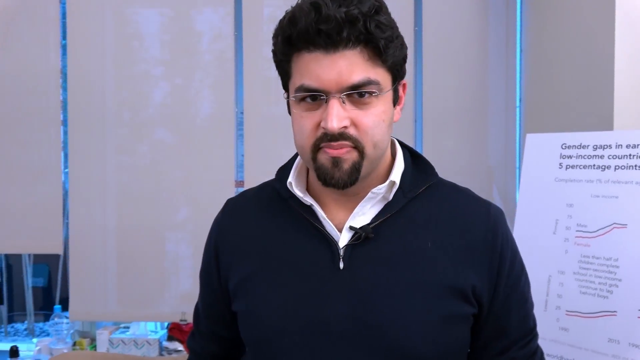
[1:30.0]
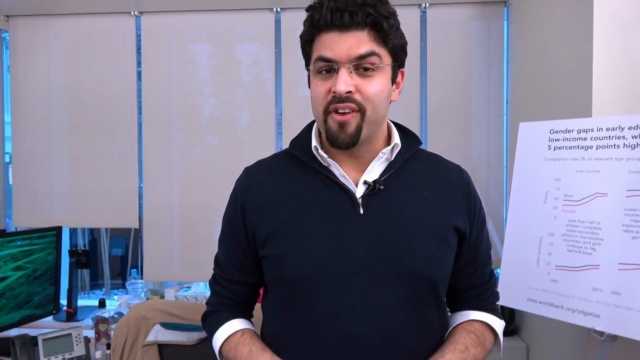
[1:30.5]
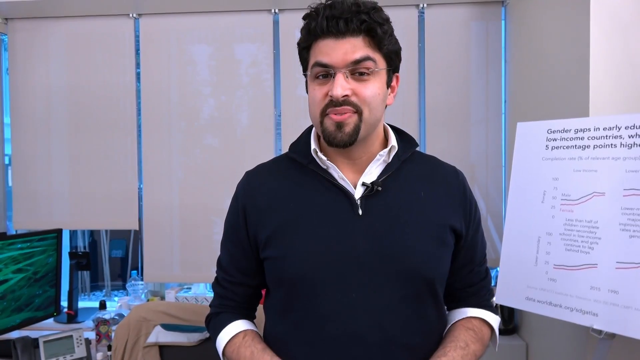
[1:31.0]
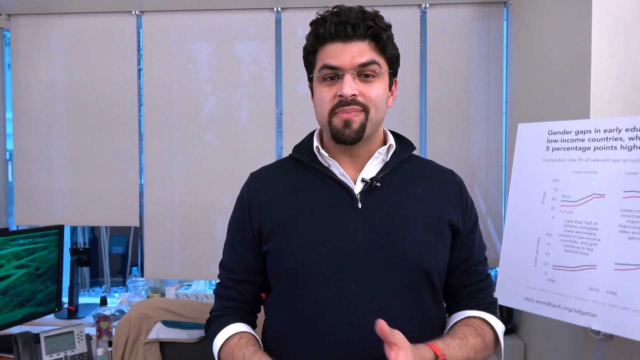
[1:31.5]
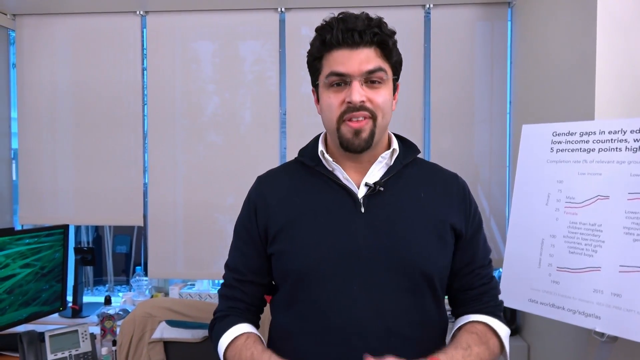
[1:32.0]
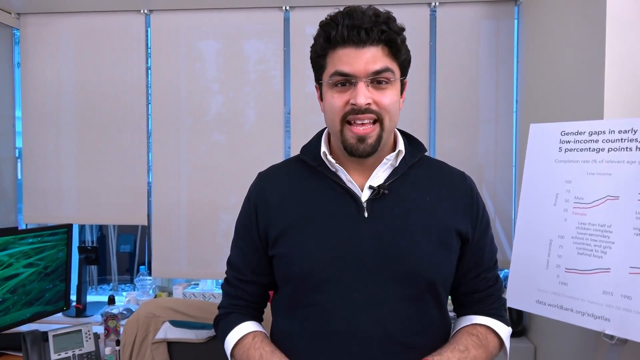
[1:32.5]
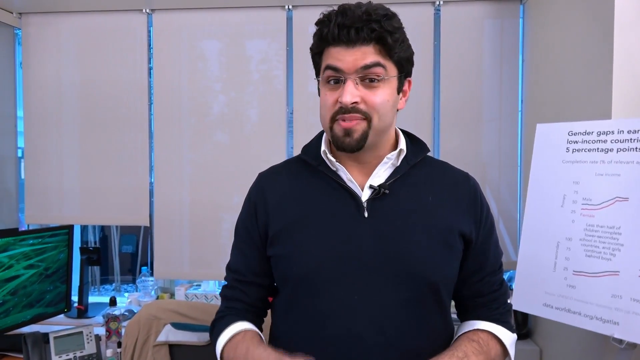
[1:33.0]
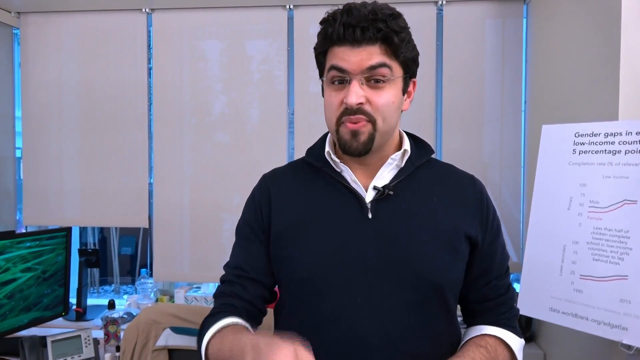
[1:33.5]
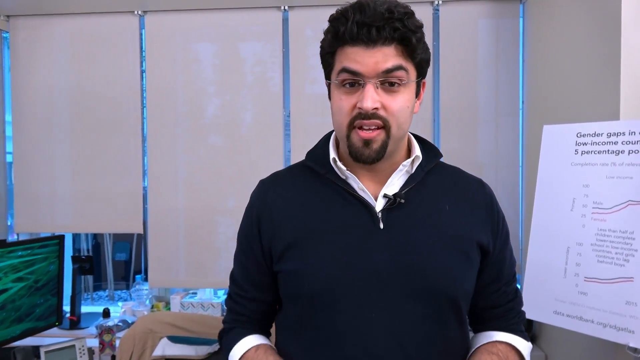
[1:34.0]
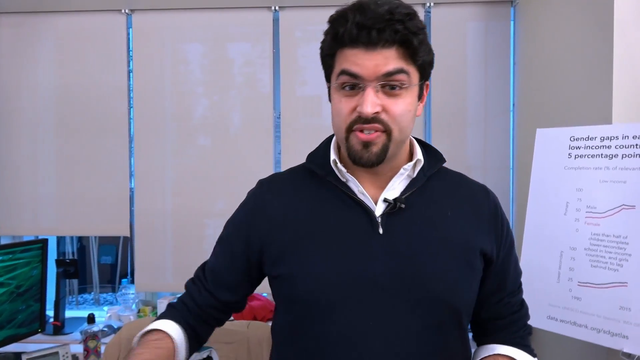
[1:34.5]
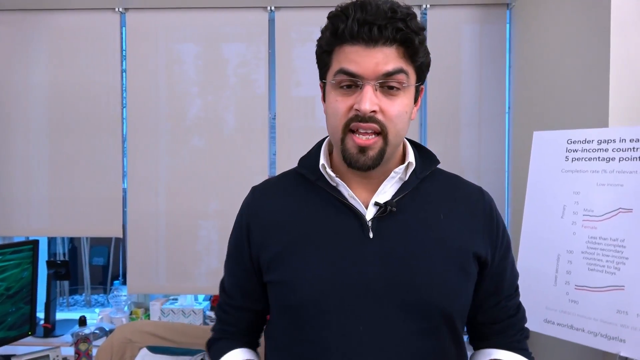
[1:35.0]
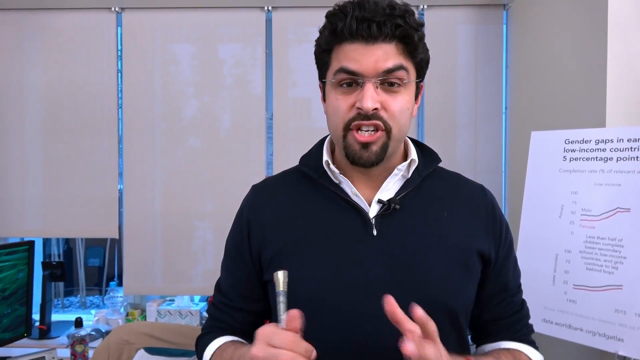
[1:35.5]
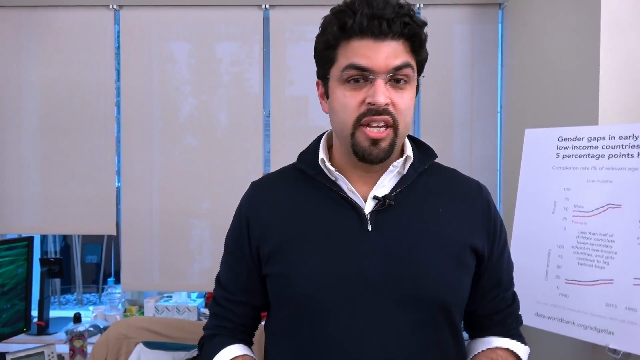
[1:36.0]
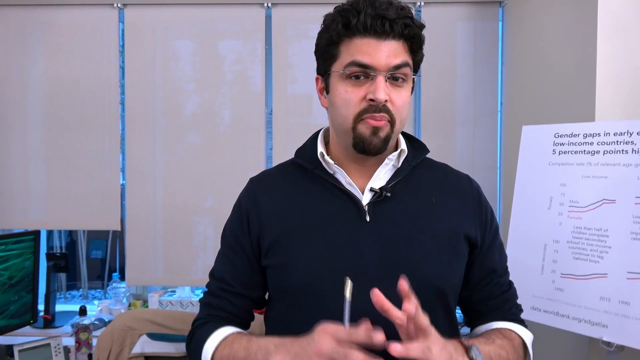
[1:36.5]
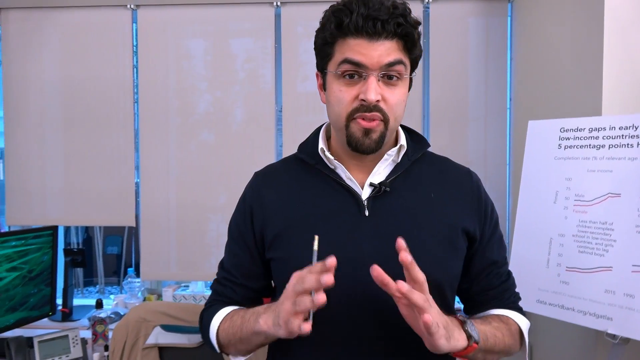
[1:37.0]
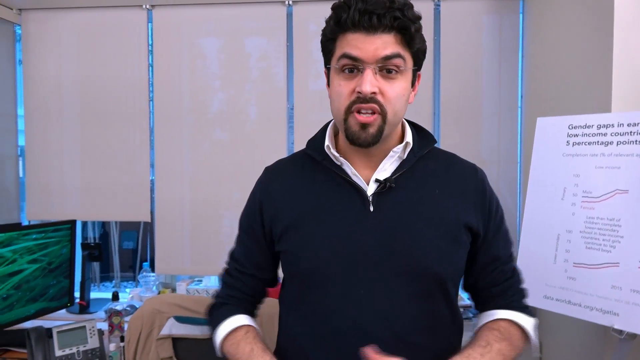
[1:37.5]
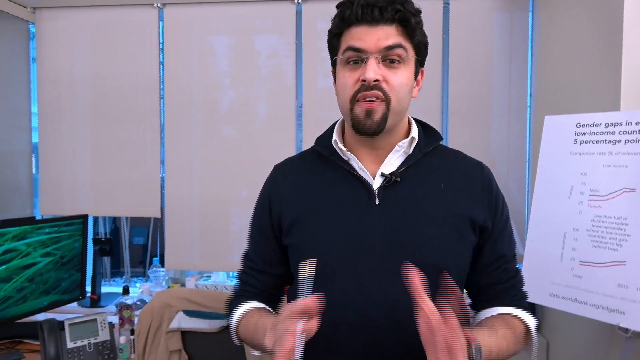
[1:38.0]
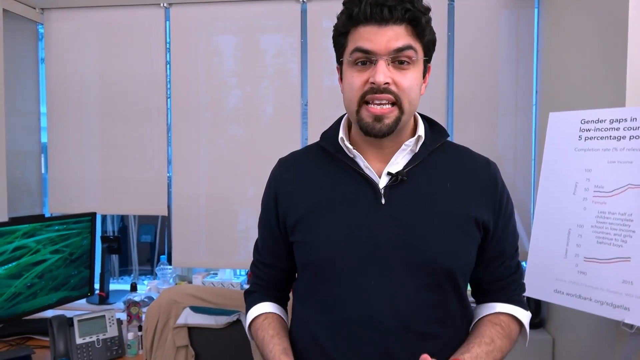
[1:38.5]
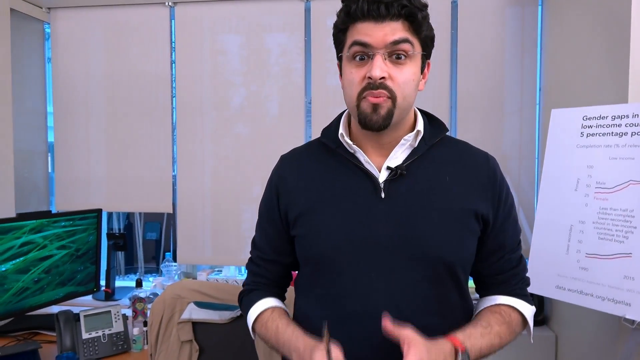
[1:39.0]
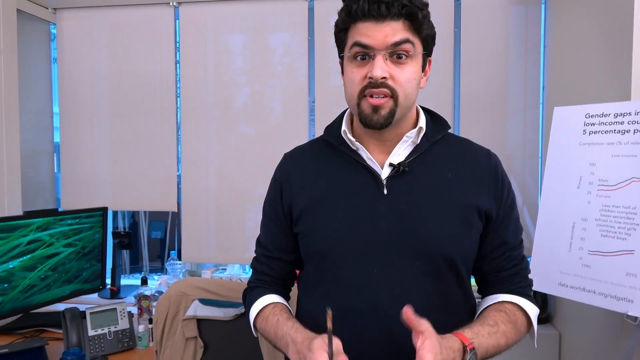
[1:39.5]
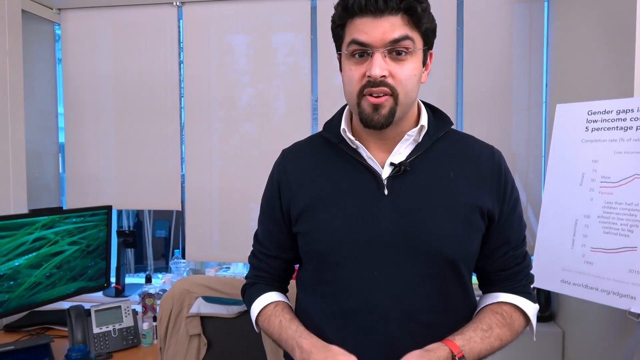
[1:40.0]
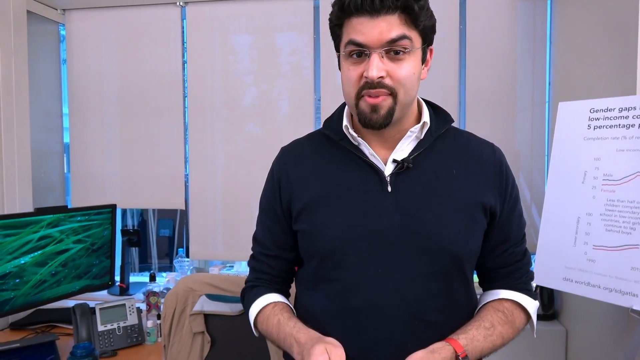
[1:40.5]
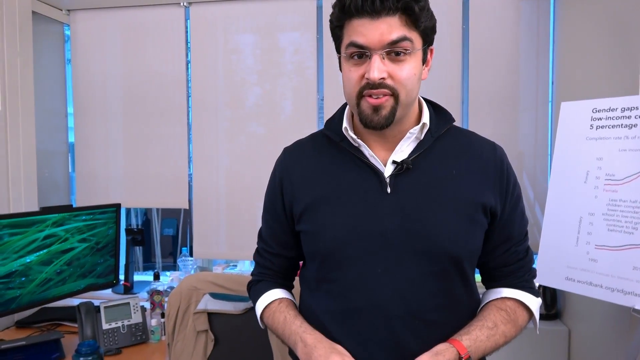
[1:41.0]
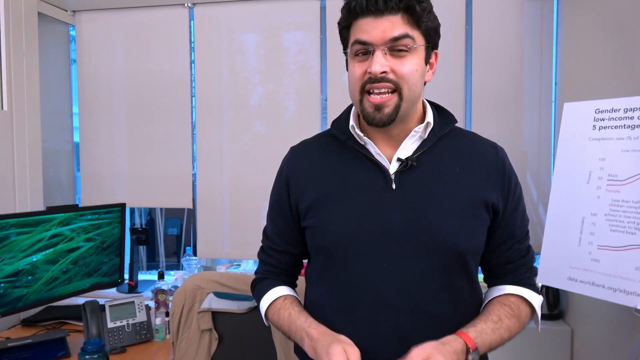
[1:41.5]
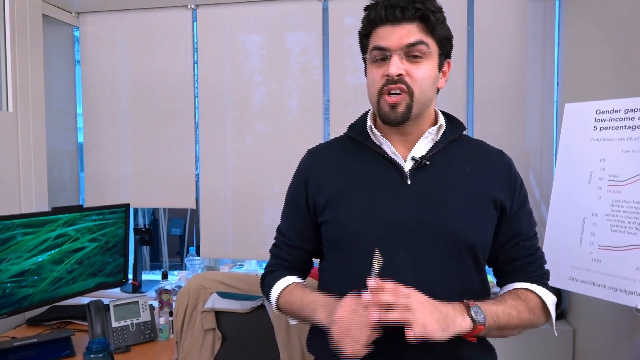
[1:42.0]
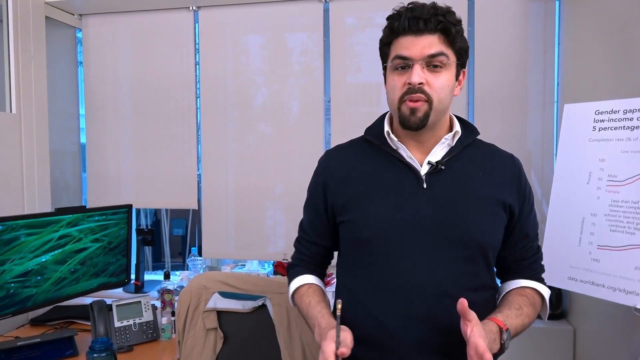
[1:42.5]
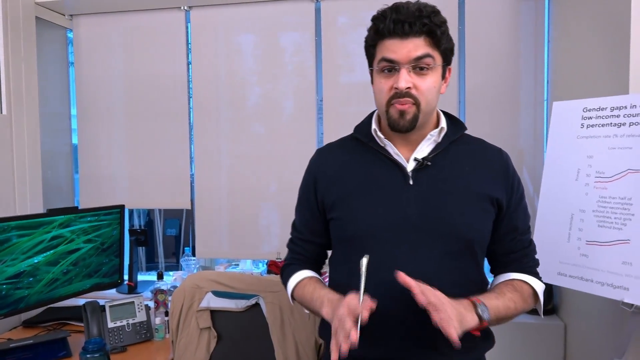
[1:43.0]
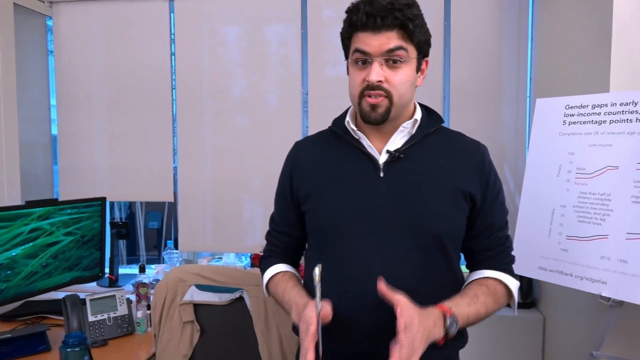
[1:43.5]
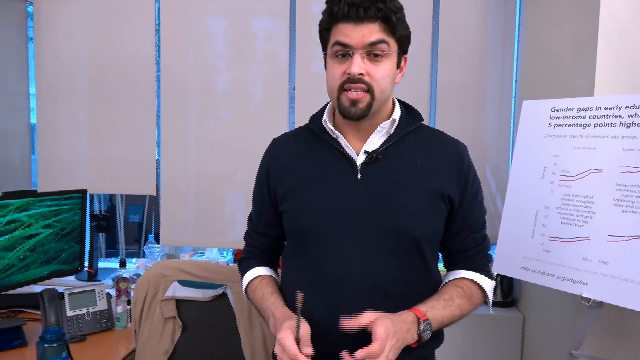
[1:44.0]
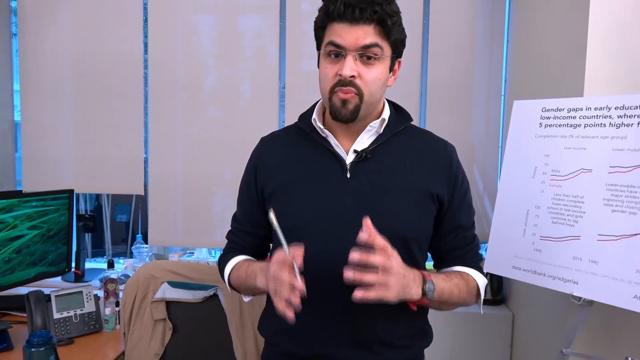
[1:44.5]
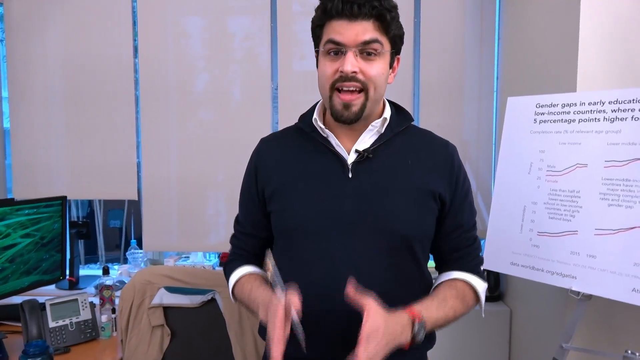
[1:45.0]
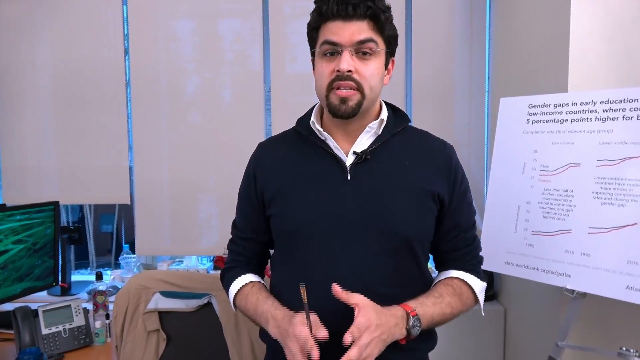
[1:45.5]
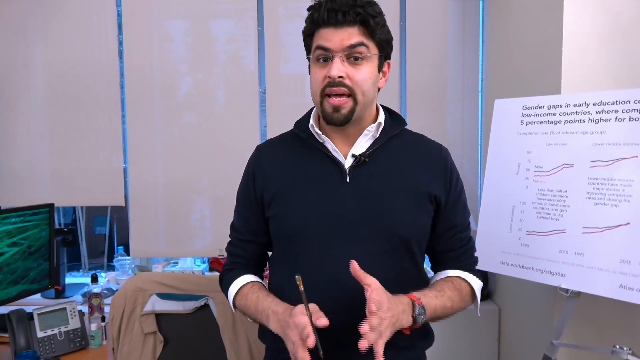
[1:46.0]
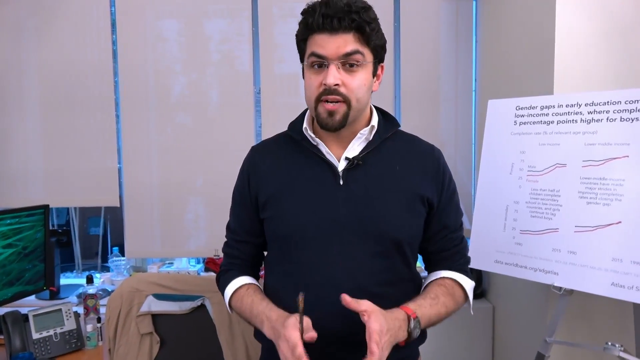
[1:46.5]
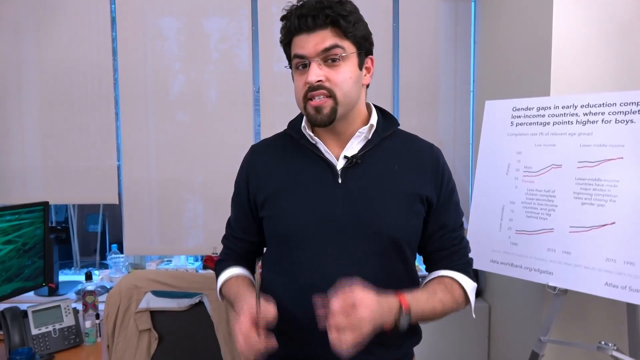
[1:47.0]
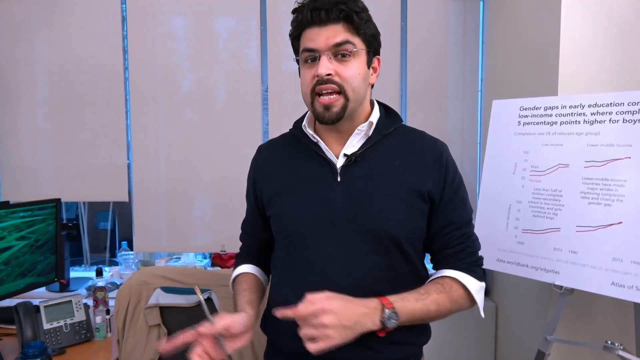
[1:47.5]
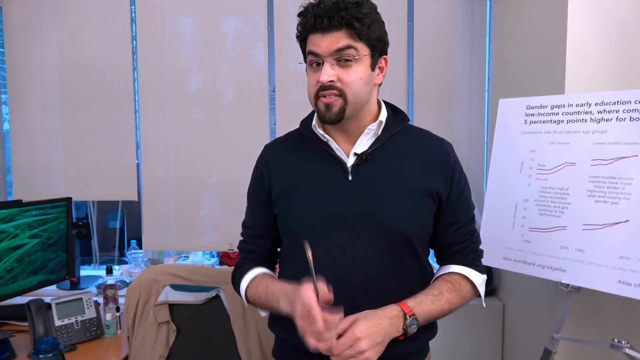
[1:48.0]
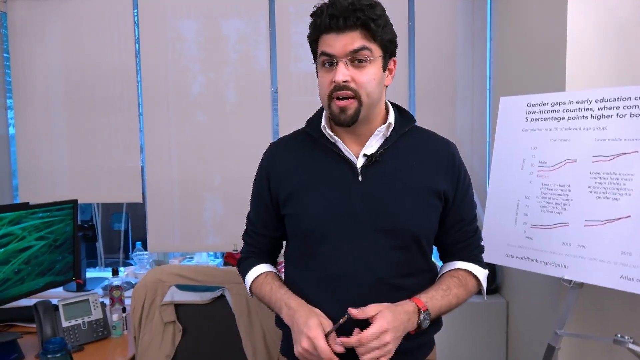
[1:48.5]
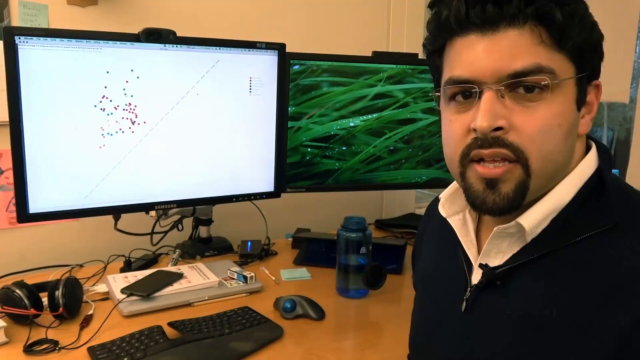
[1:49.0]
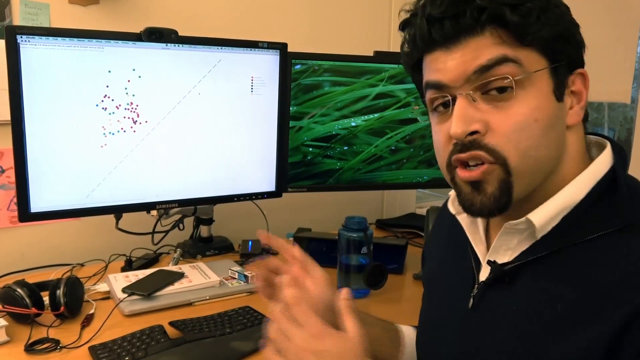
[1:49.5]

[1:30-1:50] The man is back in the computer chair at his desk, explaining the same graph on the screen. He then stands up; the camera goes back and pans right, following him while staying to his left. He goes back and continues explaining, apparently on the last item. He looks comfortable, though almost a little nervous.